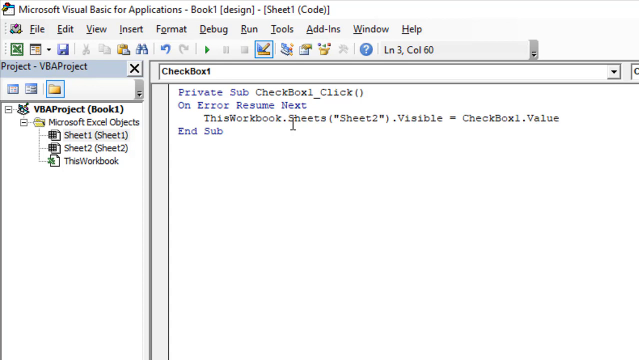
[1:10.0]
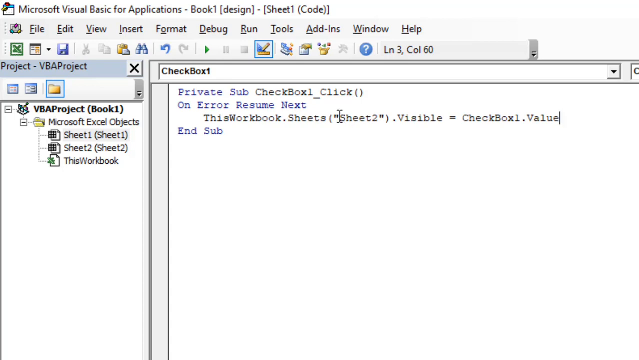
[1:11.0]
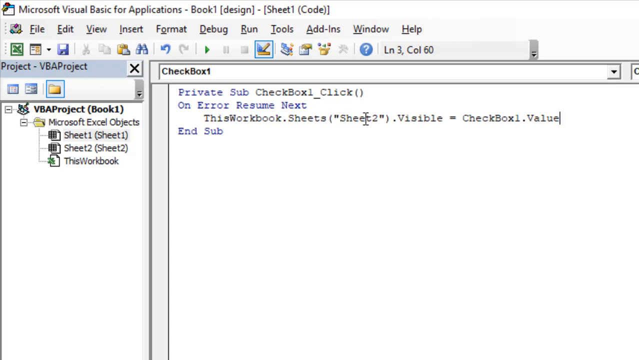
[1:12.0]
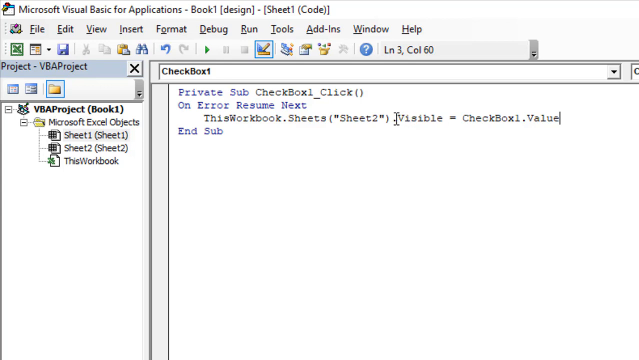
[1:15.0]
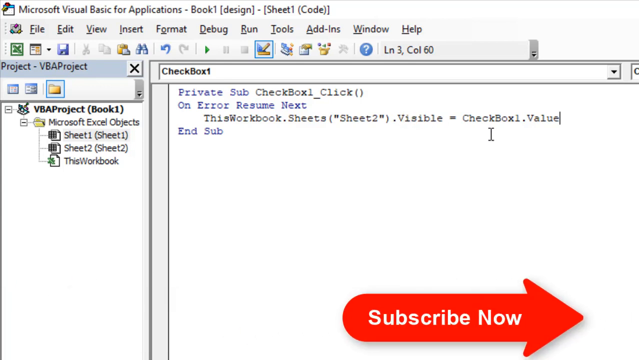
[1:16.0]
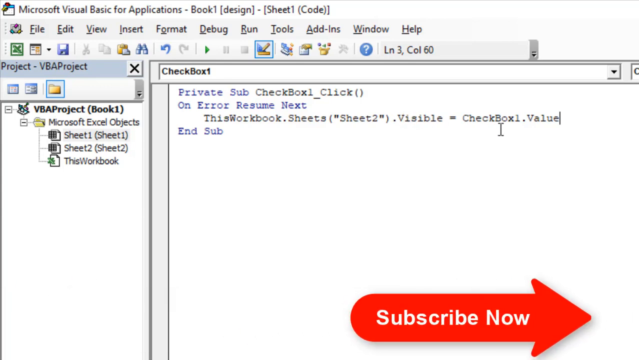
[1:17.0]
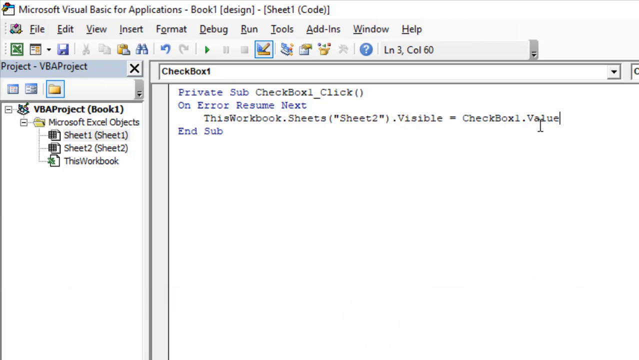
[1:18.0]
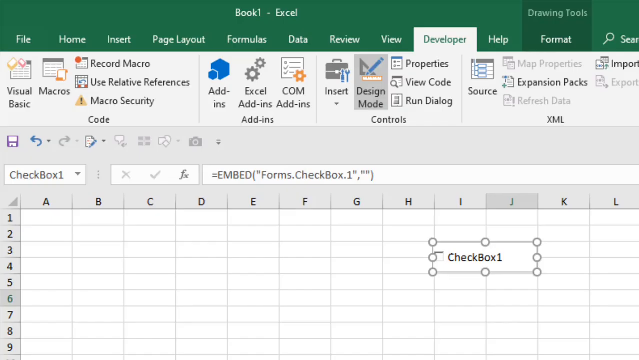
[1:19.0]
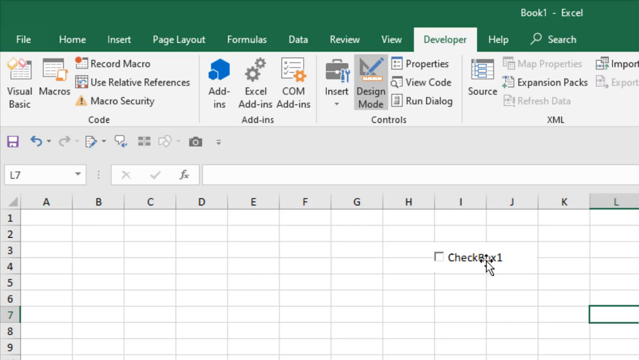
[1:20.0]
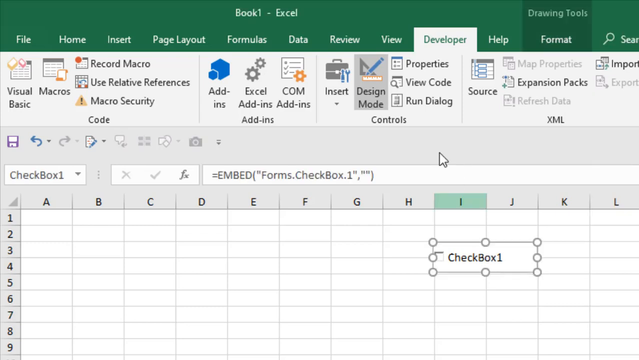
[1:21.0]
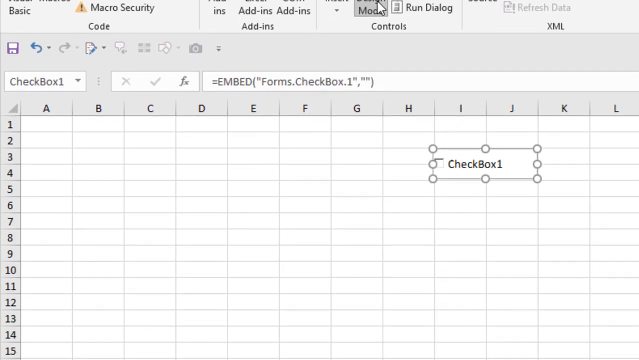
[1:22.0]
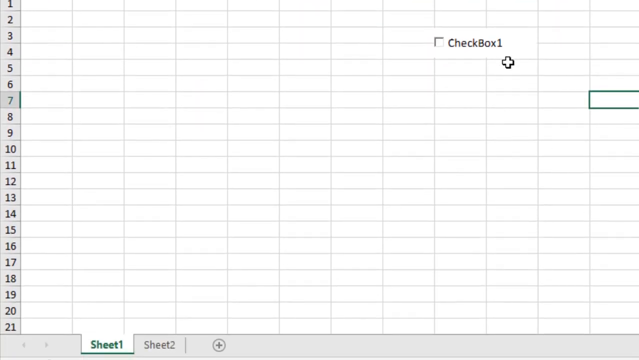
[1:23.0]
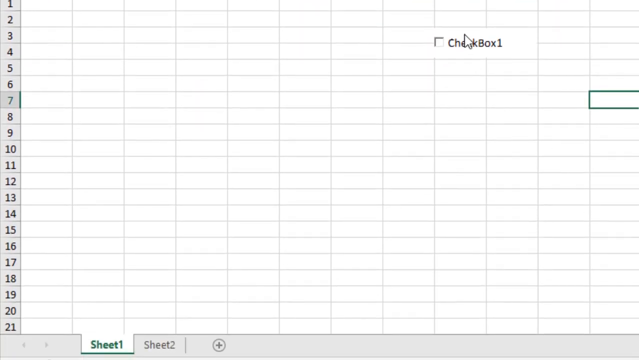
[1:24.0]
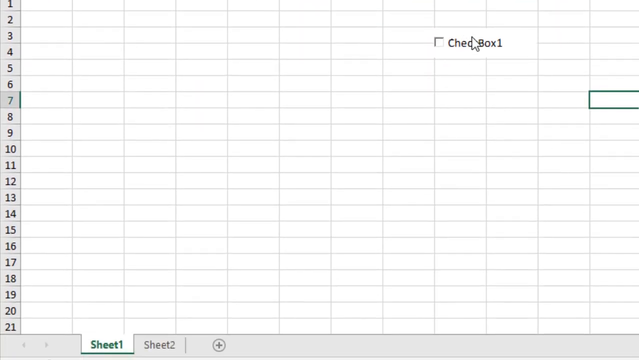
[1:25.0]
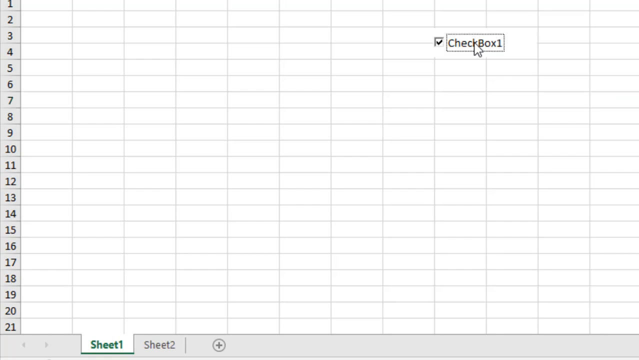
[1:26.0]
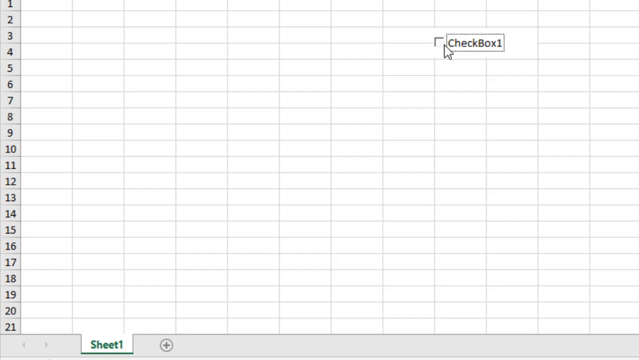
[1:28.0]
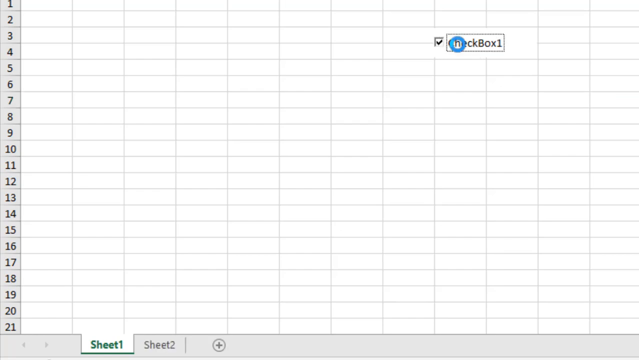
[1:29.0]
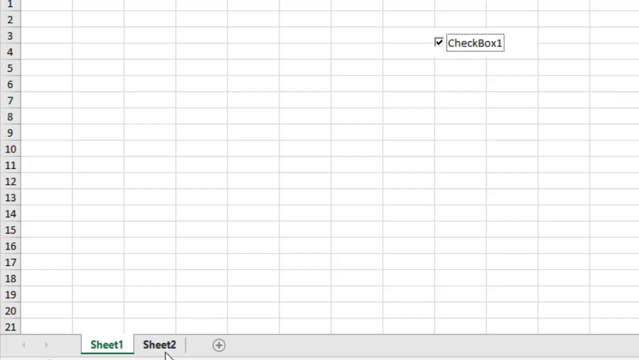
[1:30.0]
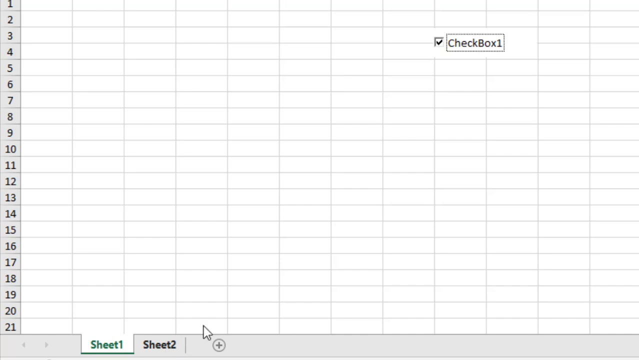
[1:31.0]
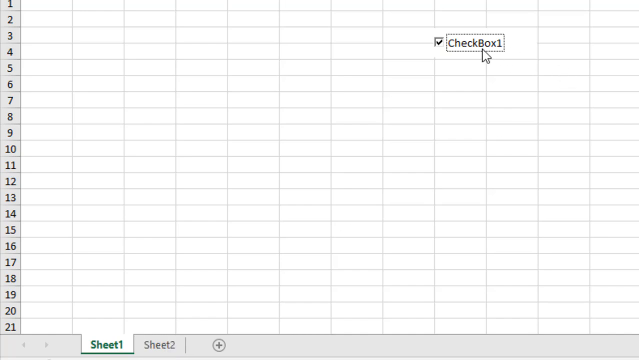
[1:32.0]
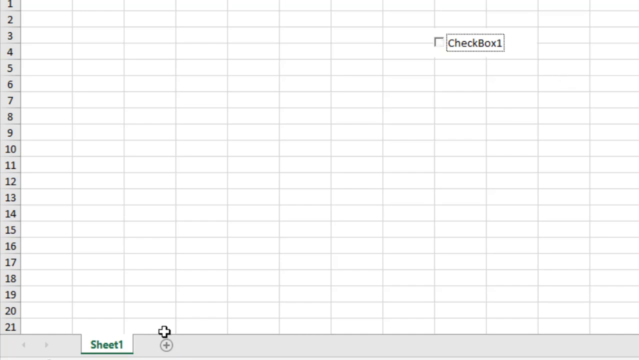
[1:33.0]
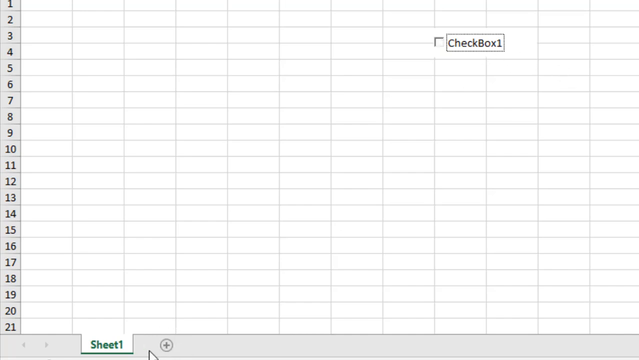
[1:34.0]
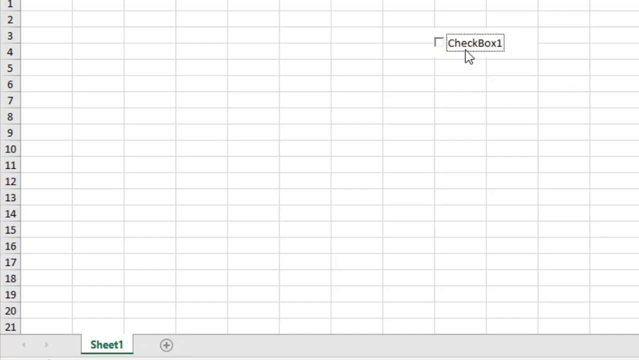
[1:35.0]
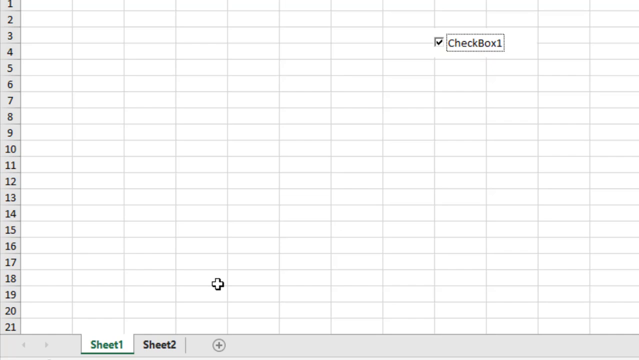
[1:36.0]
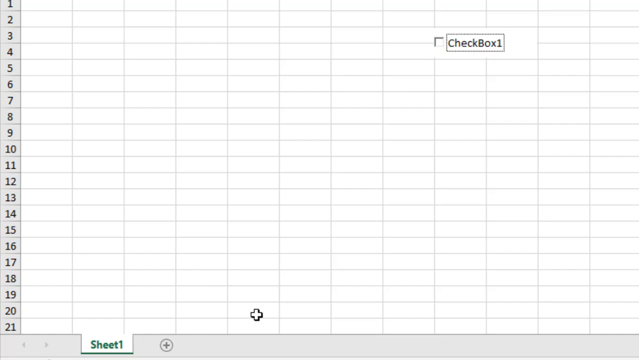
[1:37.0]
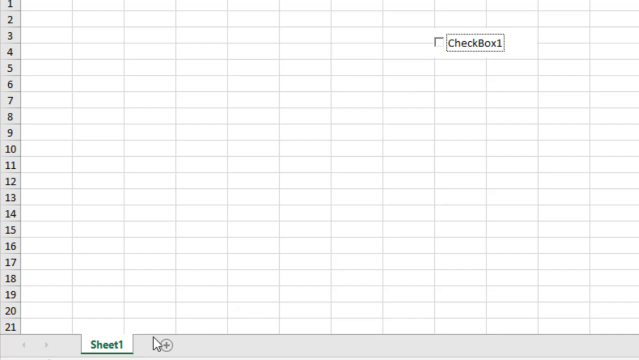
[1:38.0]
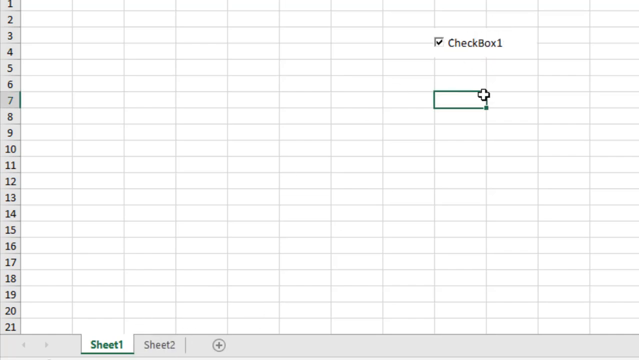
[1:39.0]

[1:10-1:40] A Microsoft Visual Basic for Applications window is shown; the very top reads "Microsoft Visual Basic for Applications, Book 1 (Design) - (Sheet 1) (Code)." Beneath it, from left to right, are the words "File," "Edit," "View," "Insert," "Format," "Debug," "Run," "Tools," "Add-ins," "Windows" and "Help." A panel on the left side reads "VBA project book one," and under that "Microsoft Excel objects," "sheet one," "sheet two" and "this workbook." To the right is a larger panel whose first line says "private sub check box"; further lines include one beginning "this workbook. sheet" and, below that, "end sub." The mouse moves over the "this workbook" line.